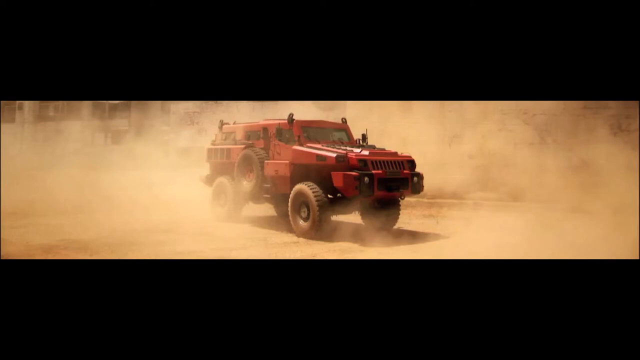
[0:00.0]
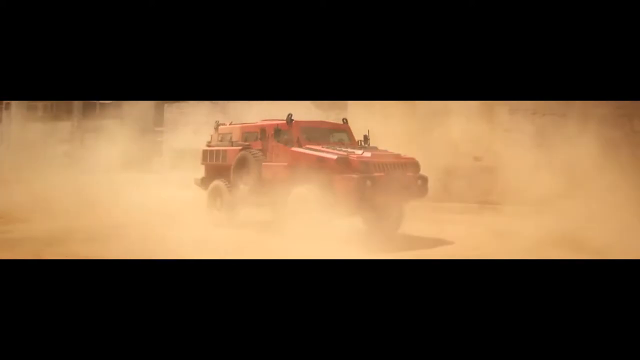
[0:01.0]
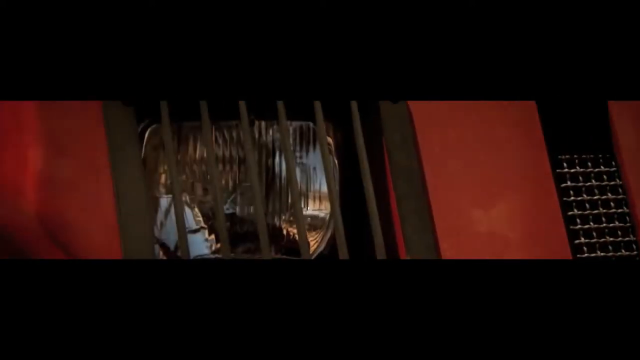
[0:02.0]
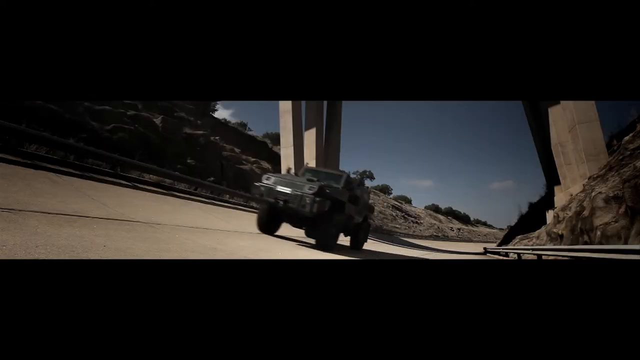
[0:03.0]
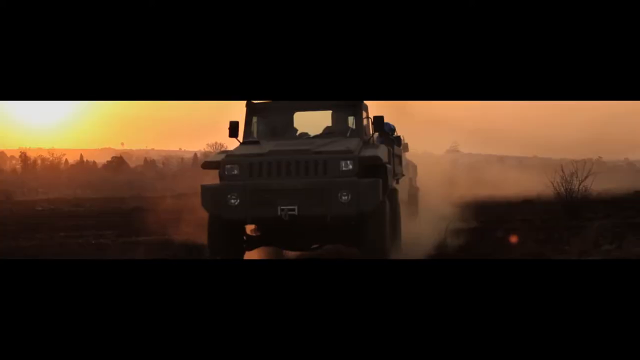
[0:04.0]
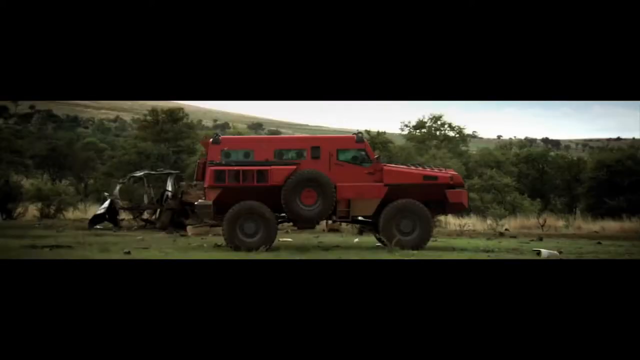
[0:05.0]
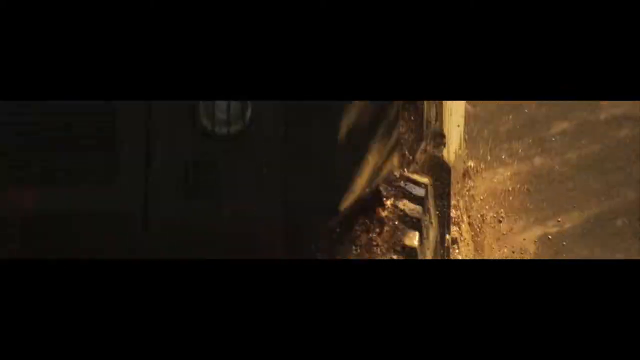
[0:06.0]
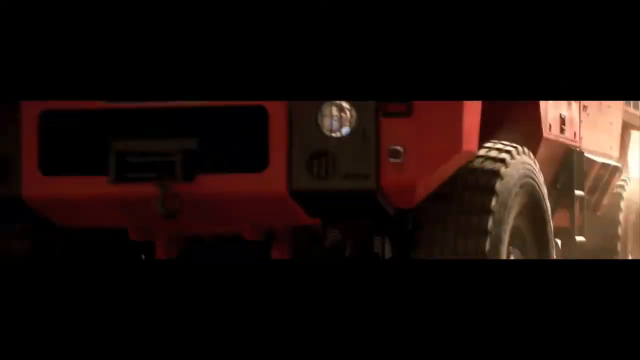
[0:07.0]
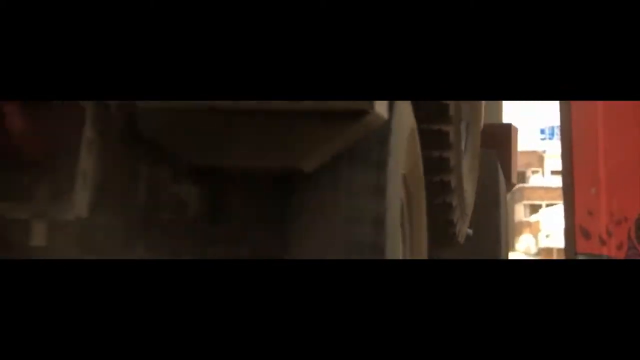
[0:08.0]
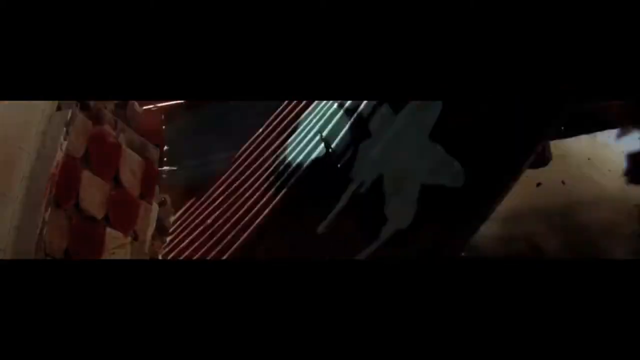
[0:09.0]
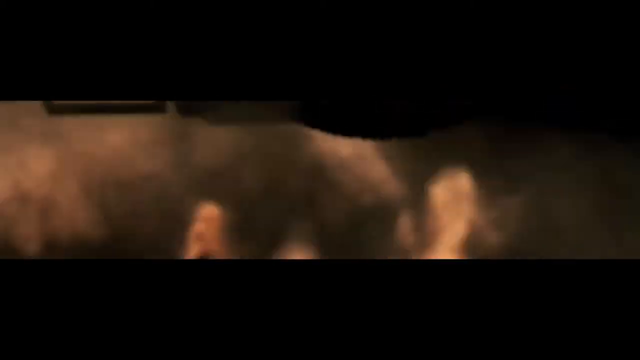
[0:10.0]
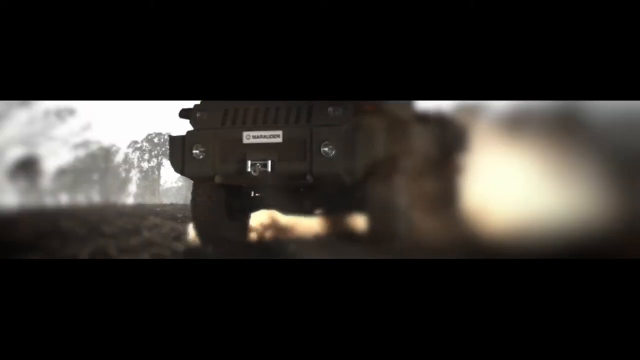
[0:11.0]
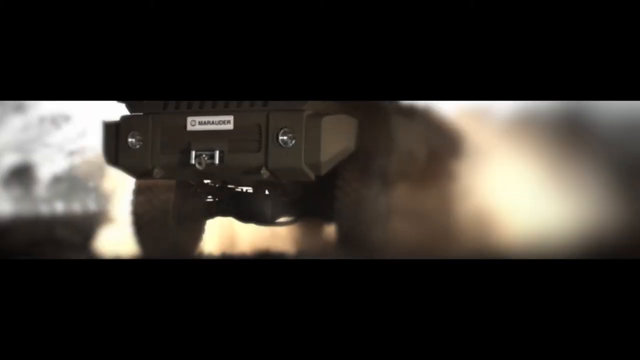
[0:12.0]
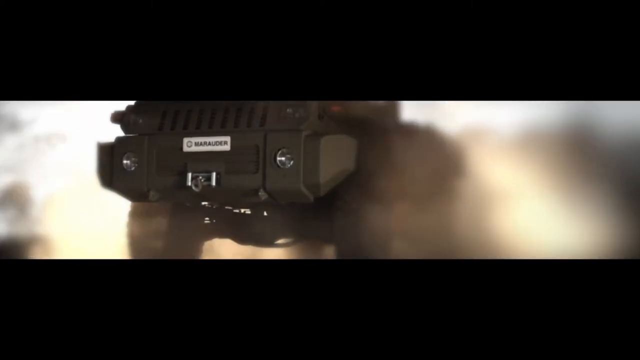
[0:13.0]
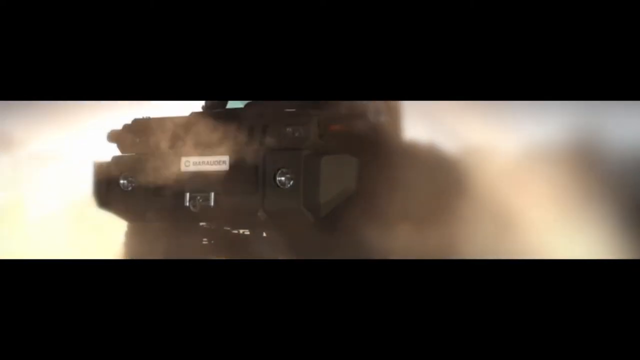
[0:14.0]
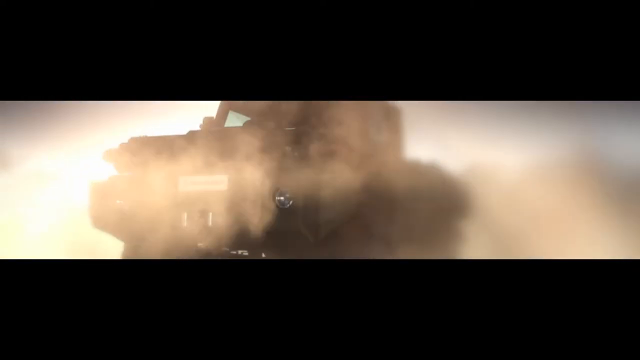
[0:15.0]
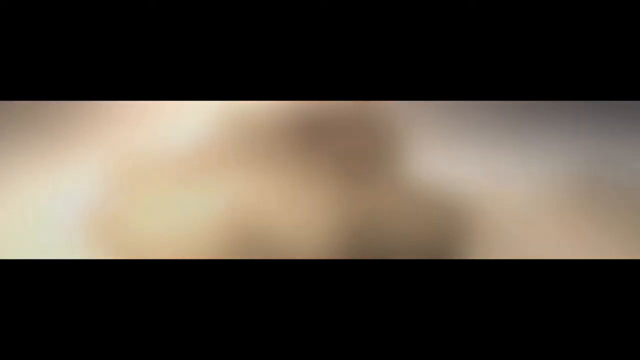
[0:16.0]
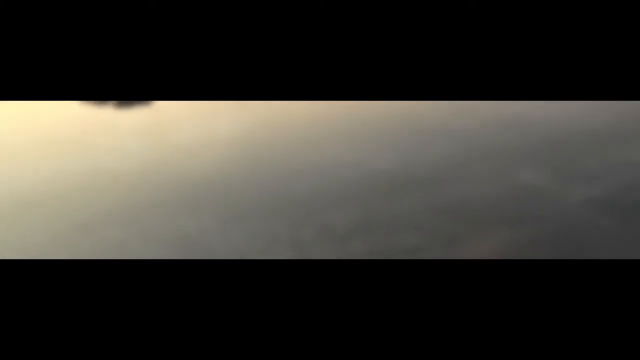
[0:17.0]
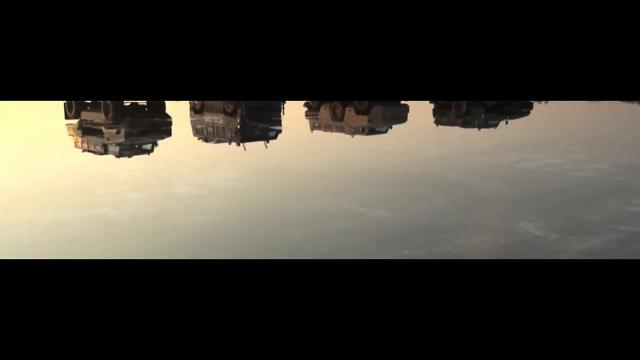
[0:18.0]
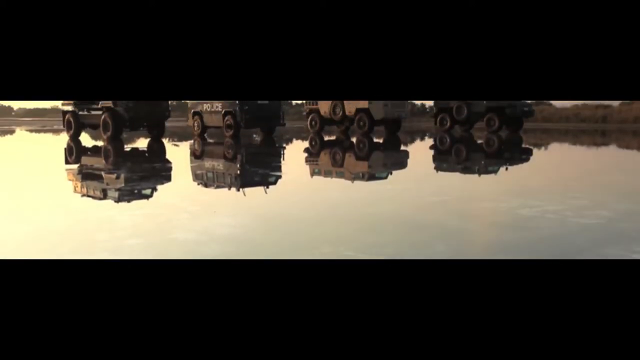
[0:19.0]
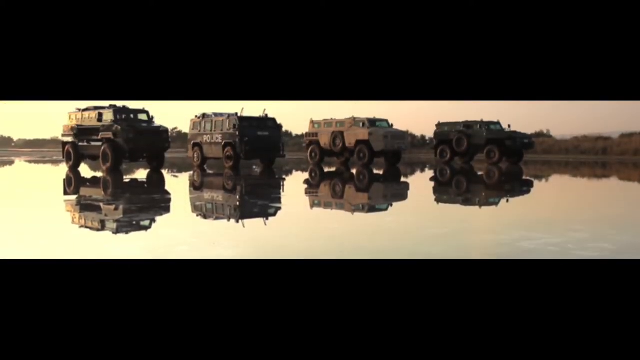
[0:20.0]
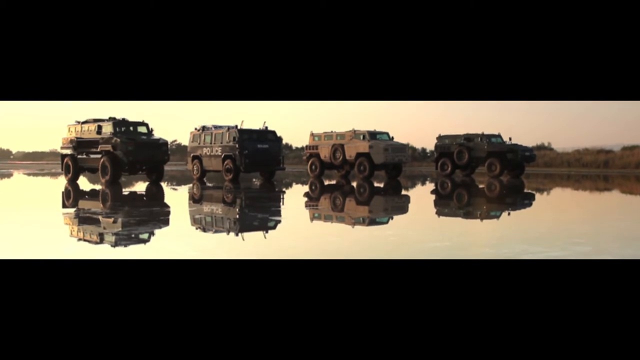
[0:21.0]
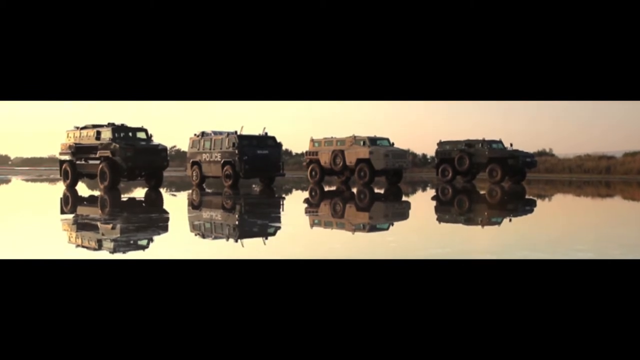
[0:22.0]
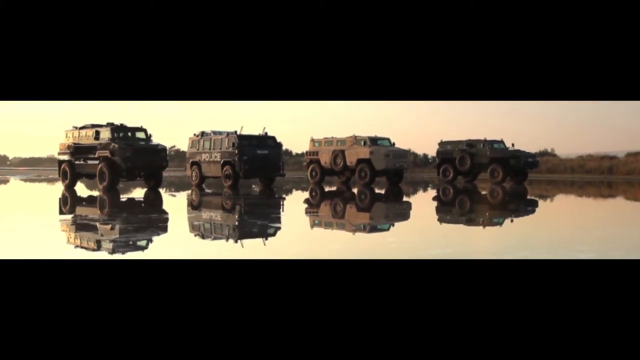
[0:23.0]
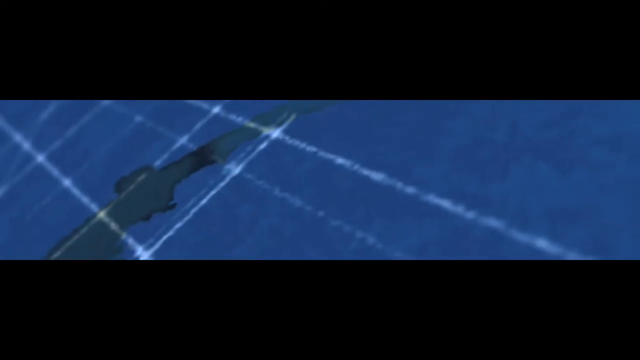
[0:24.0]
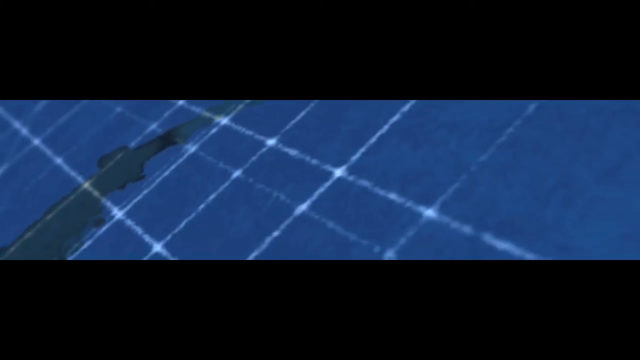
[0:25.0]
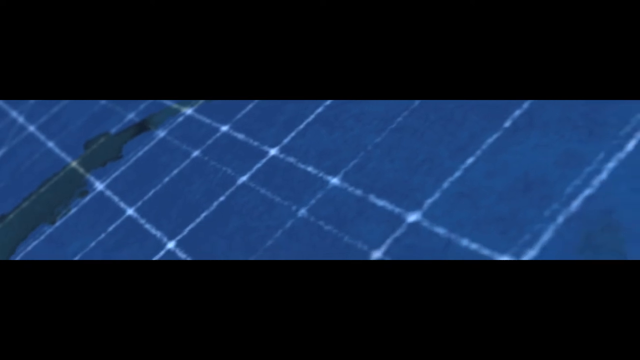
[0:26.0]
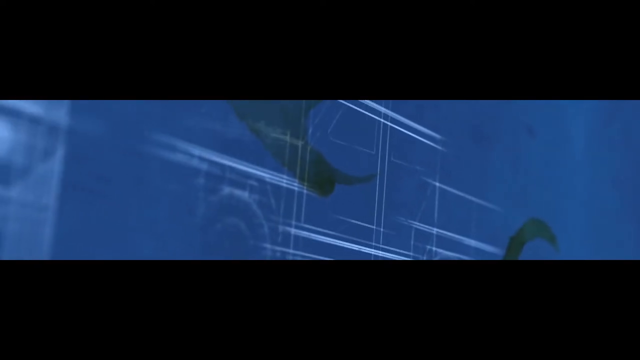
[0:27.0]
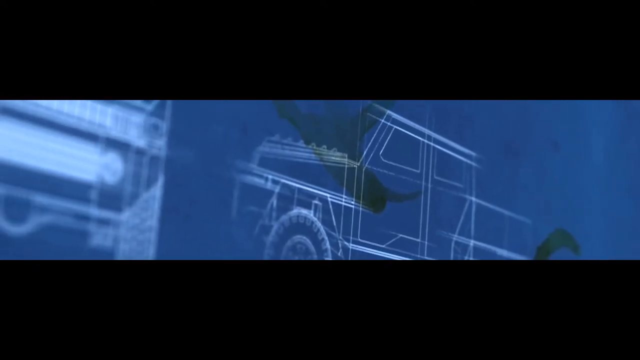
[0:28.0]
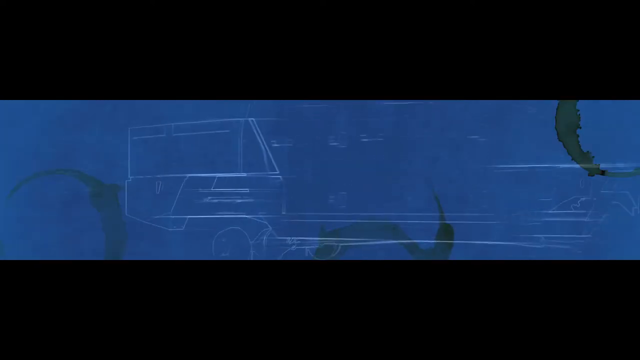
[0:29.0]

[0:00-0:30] The video opens on a red car, then zooms in to the front of the car before zooming back out to a different scene of a different car. These seem to be off-road vehicles, something like Range Rovers, and they are riding on a racetrack. The video cycles between many short shots: a car explodes, a car drives through mud, the red car drives on the road, and the red car slams into a wall. It zooms back into the tractor, which stops, and then stops again. Next comes an upside-down view of four tractors, which turns out to be the tractors on a lake, reflected in the water. The one on the far left is like a tank, followed by a box car and then two more tank-like cars. White line grids then form on a blue map, creating white line diagrams that show a picture of the car, followed by a more 3D diagram.